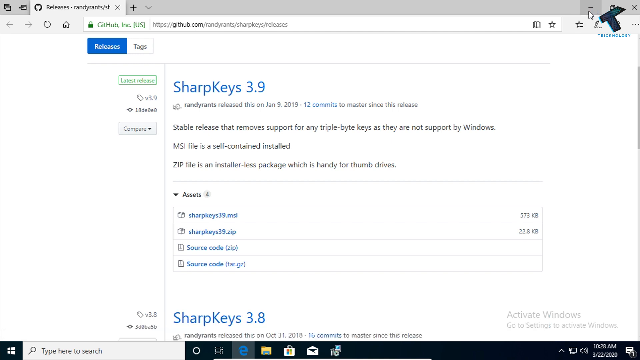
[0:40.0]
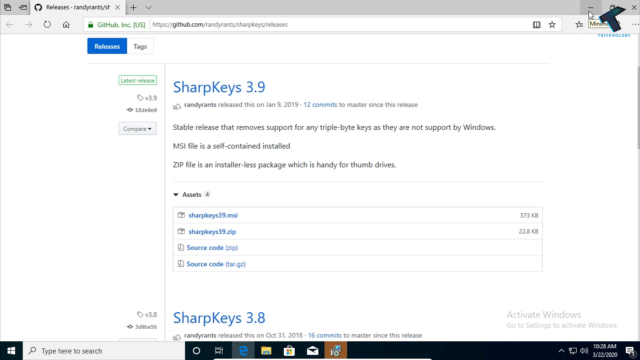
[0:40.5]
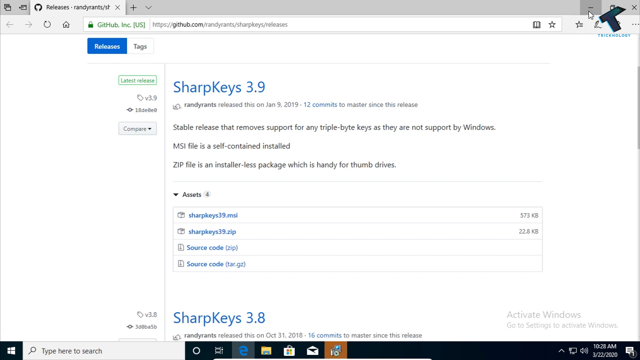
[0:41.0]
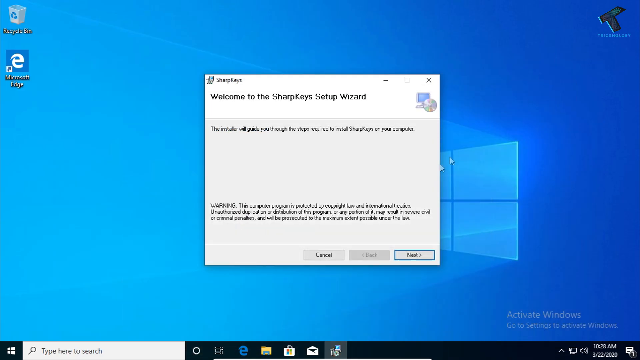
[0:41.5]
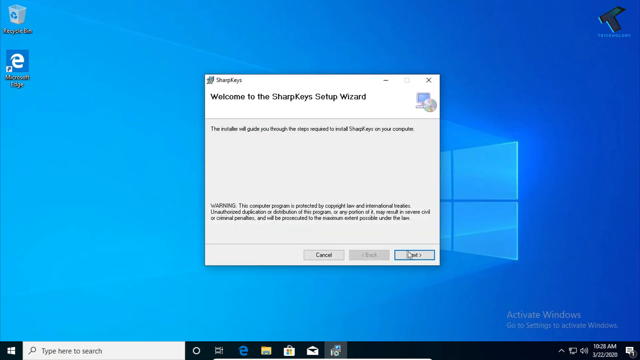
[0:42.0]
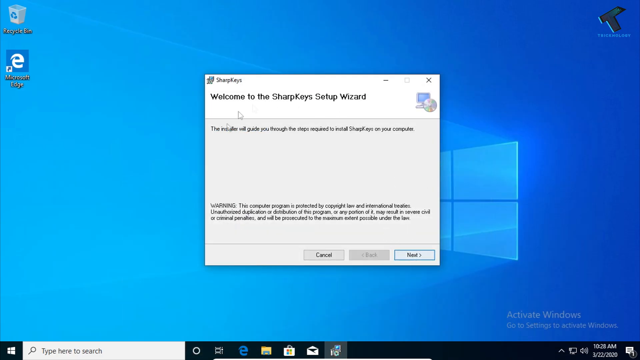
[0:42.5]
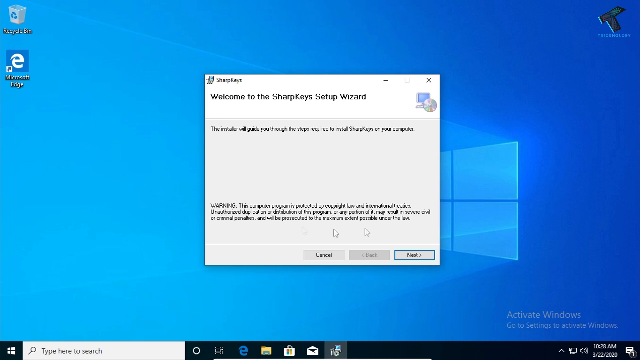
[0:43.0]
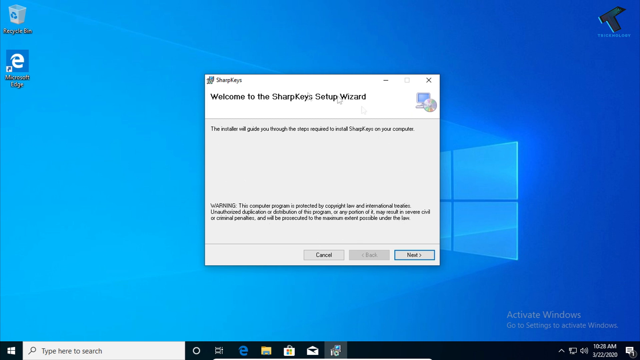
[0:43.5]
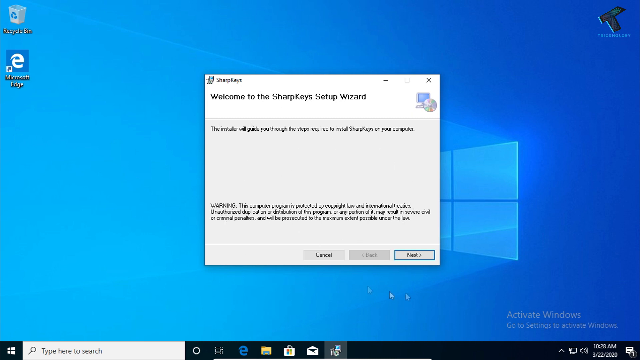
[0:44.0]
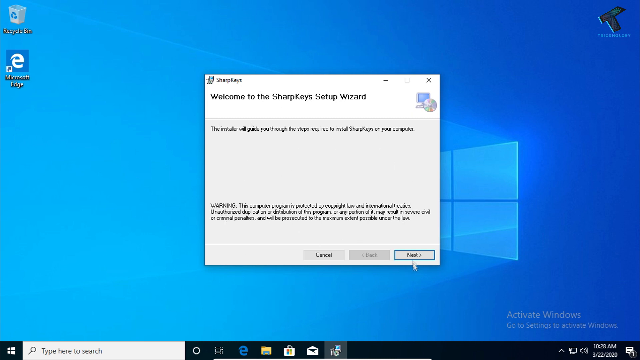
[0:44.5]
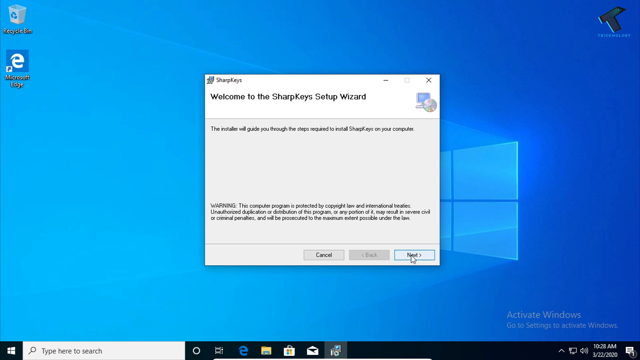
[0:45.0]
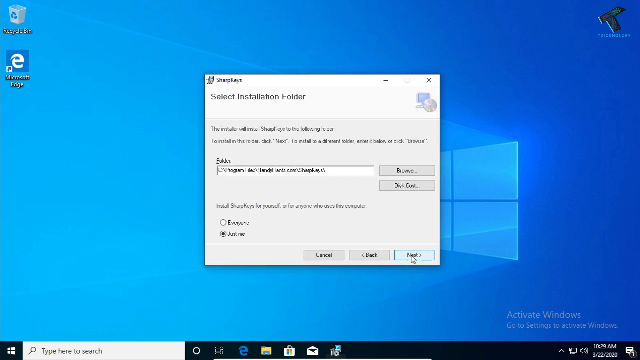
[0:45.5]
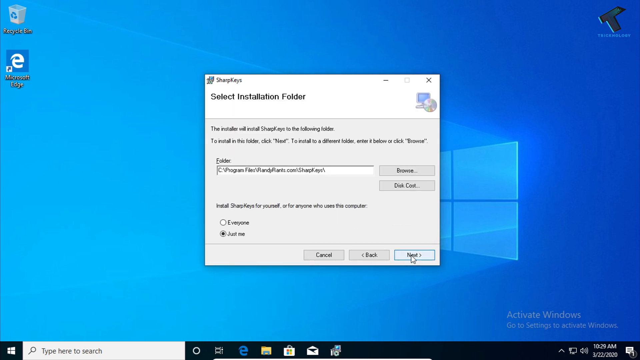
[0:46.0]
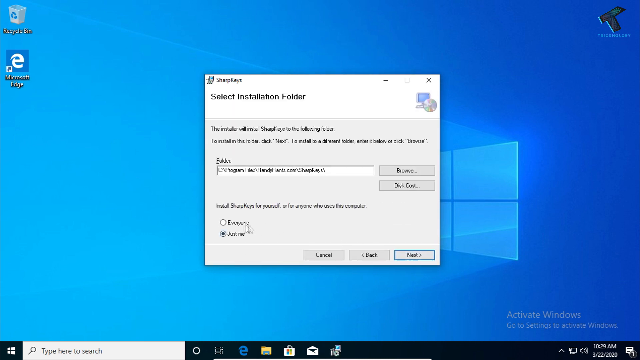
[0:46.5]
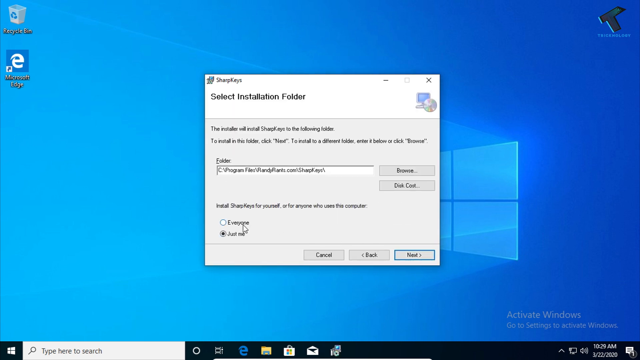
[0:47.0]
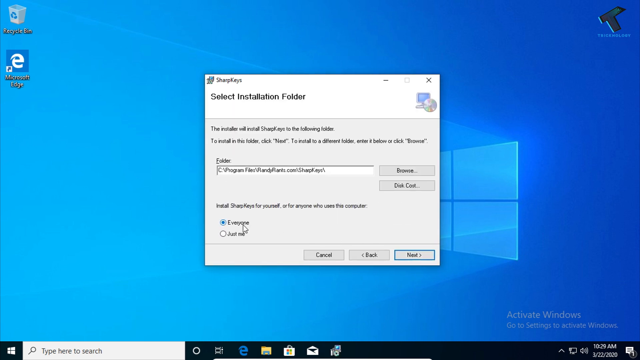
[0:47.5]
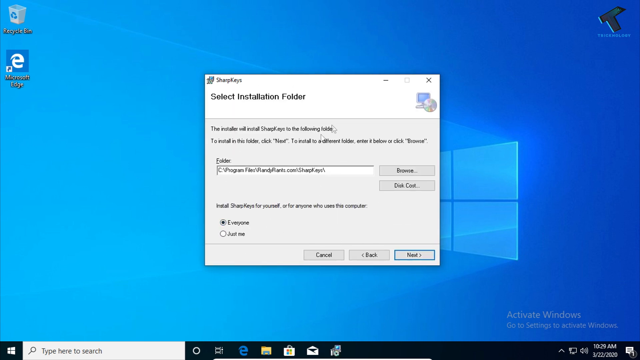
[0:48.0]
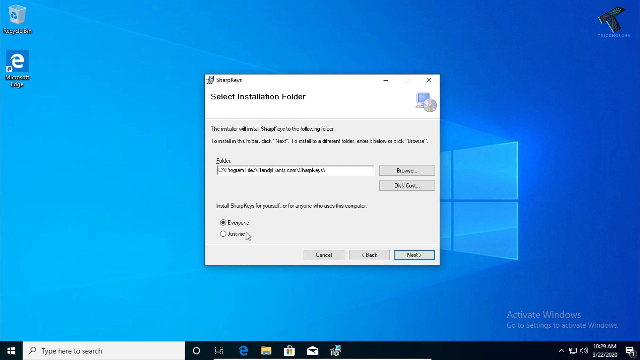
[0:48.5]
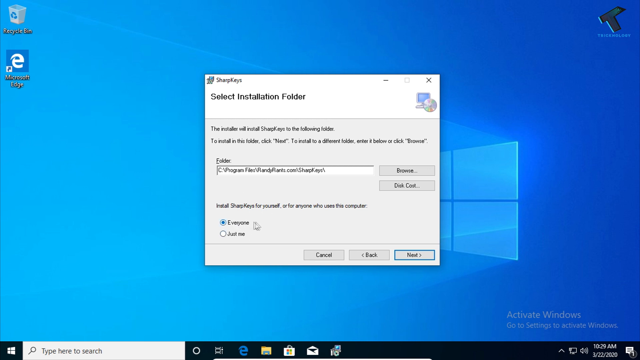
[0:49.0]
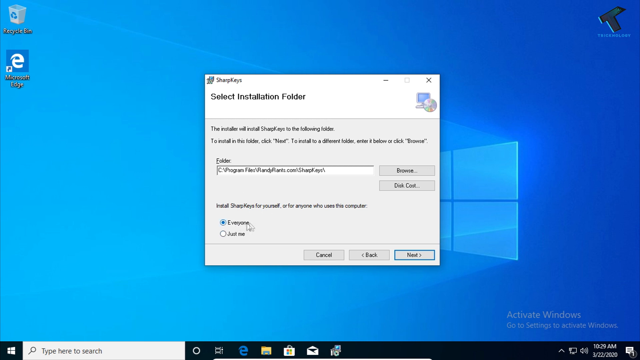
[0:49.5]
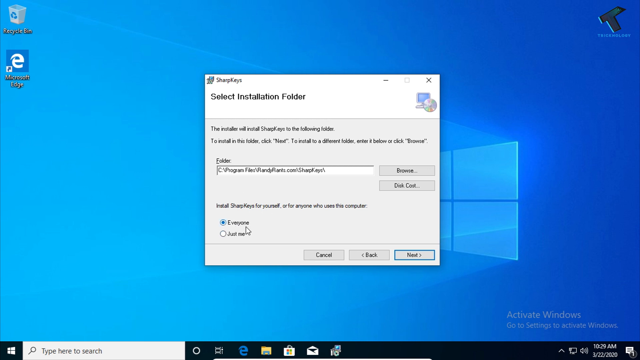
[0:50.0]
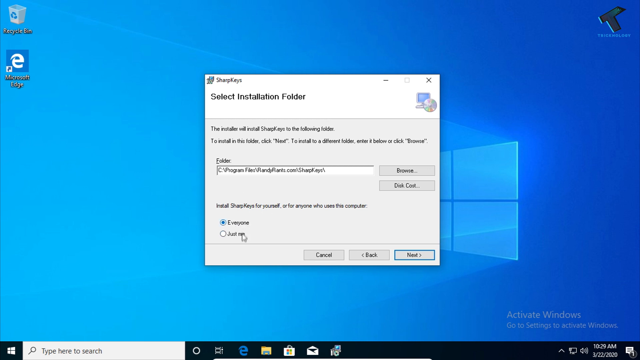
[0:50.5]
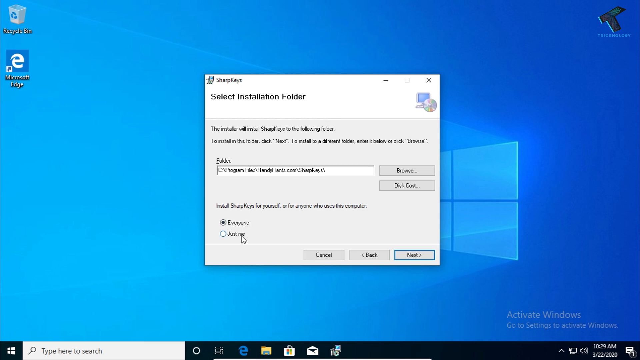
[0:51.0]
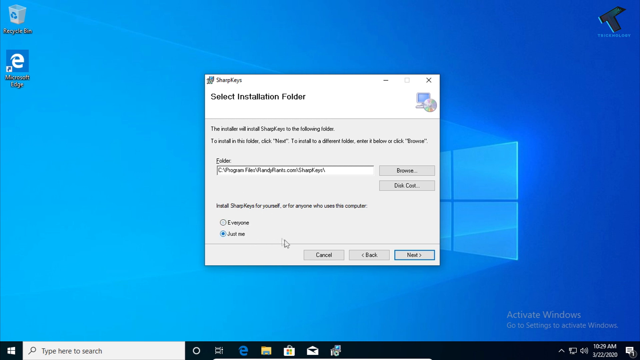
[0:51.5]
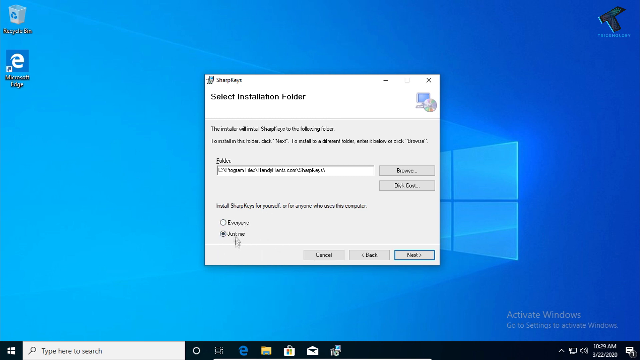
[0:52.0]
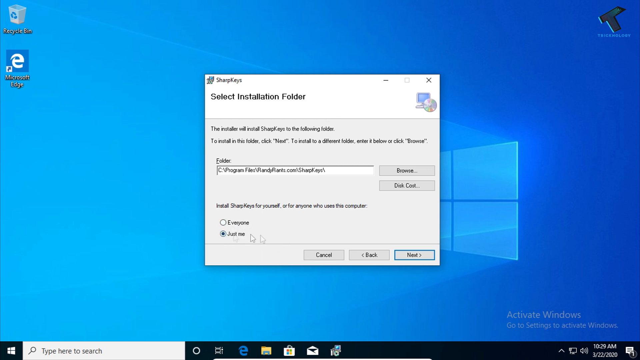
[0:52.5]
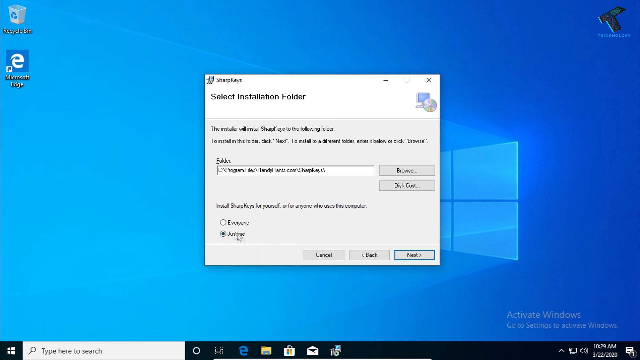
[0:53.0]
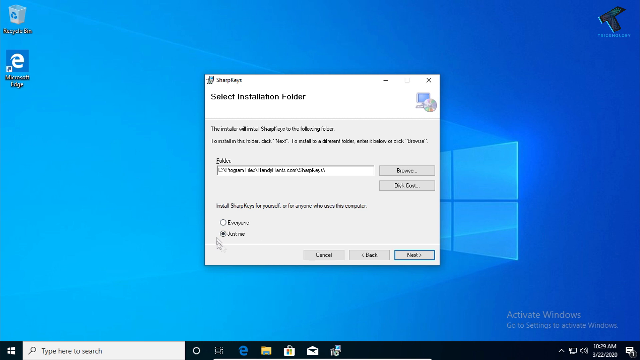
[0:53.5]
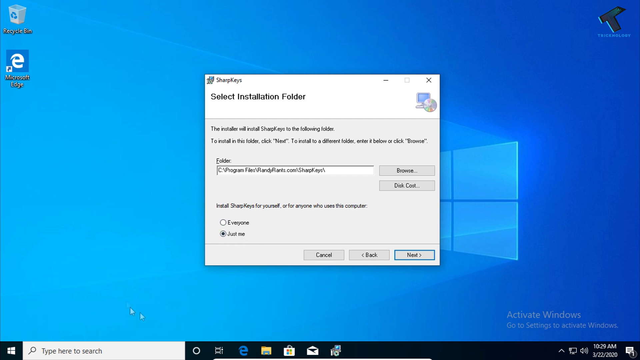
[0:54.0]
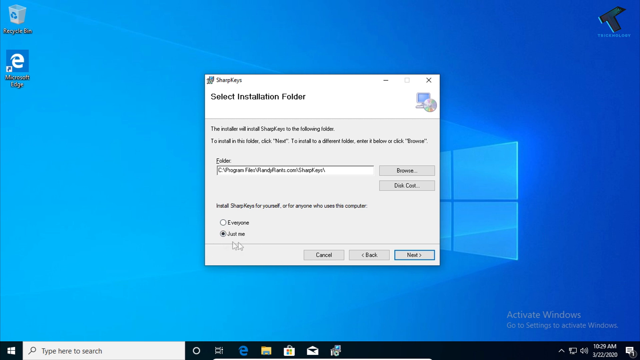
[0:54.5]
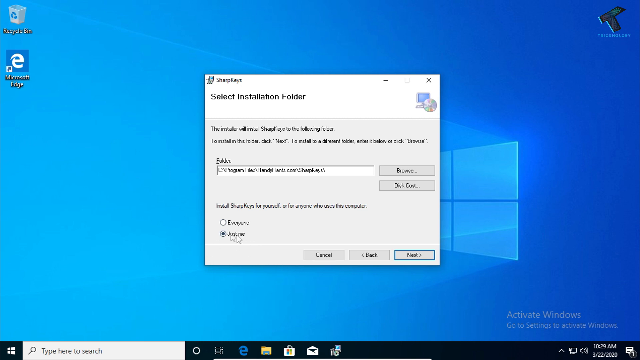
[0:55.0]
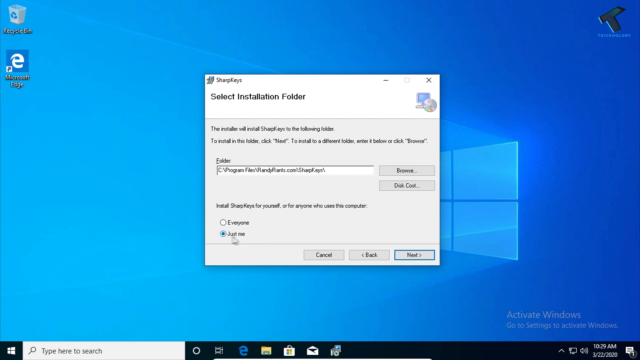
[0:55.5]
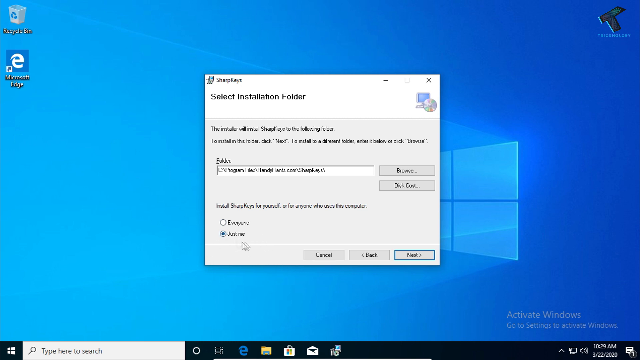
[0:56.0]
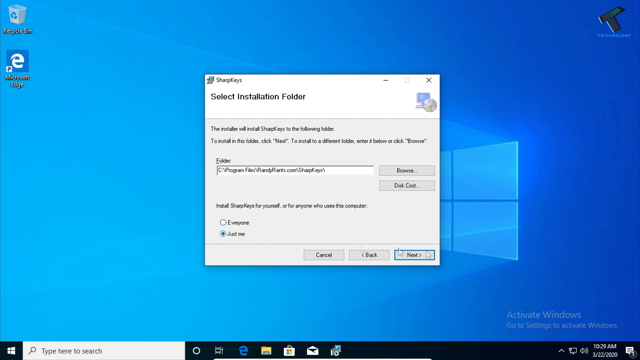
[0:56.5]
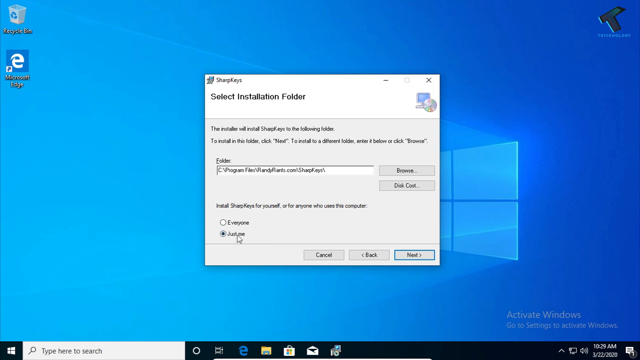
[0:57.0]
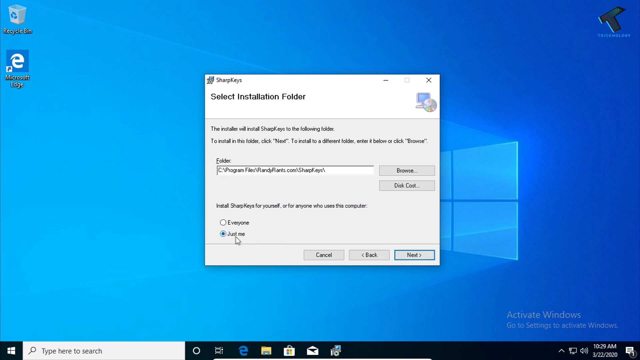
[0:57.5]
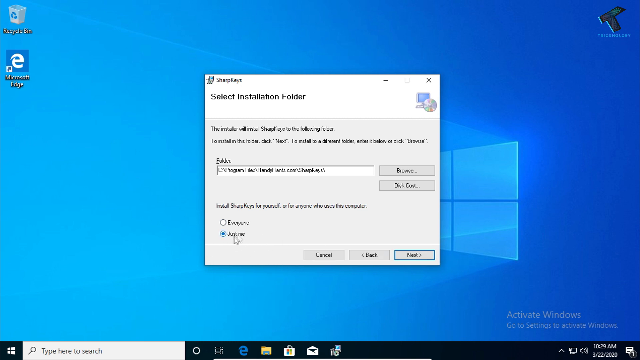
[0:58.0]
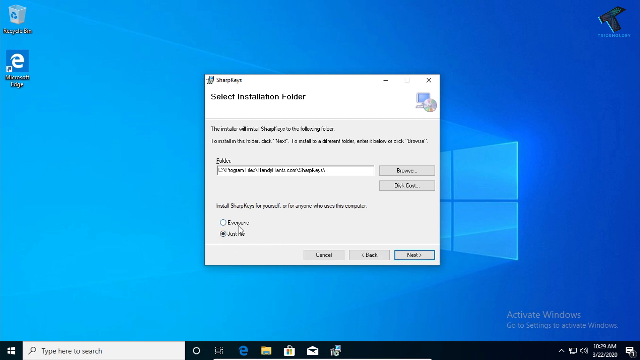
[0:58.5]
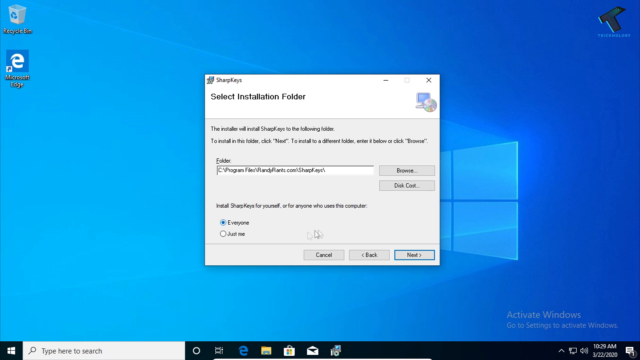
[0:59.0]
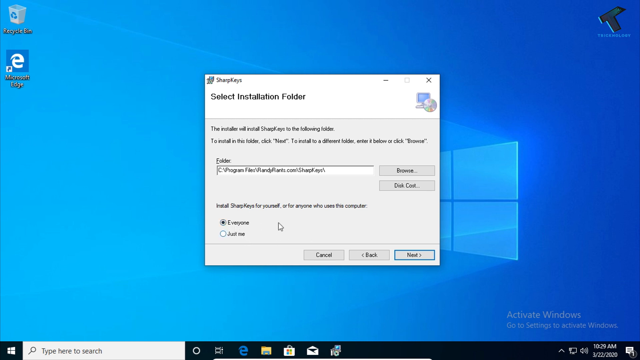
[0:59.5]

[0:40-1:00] On the GitHub website, the user scrolls around the SharpKeys 3.9 section, which has an explanation of the program and links that look like they go to the source code and to the program itself. A version then appears to have been selected, and an install wizard opens reading "welcome to the SharpKeys setup wizard. The installer will guide you through the steps required to install SharpKeys on your computer", with what look like warnings at the bottom. The cursor seems to circle around the window before selecting Next. The next step involves choosing a folder to install SharpKeys into and setting sharing options for privacy; apparently "just me" is selected under privacy.